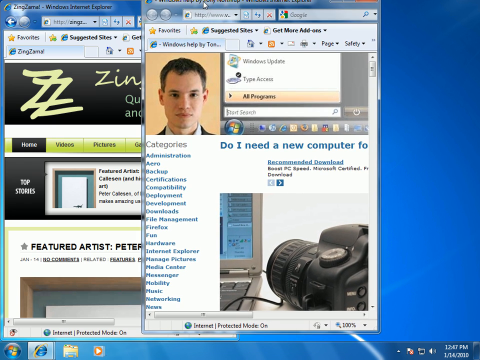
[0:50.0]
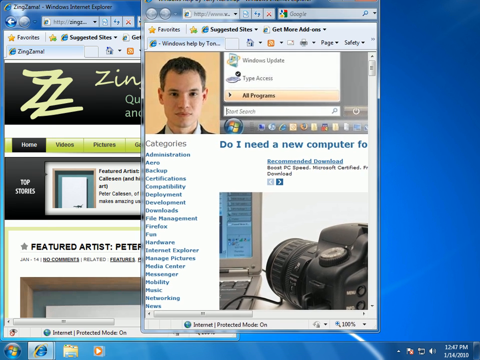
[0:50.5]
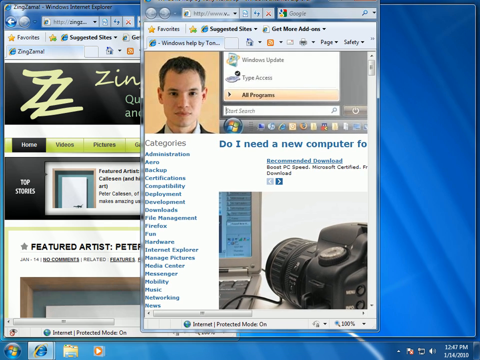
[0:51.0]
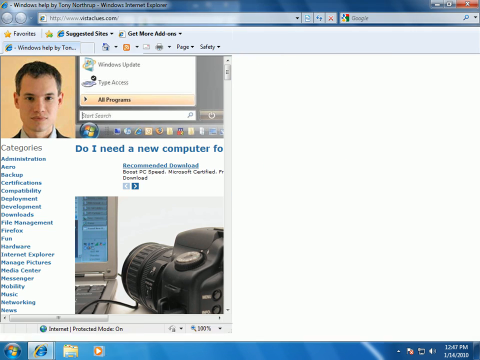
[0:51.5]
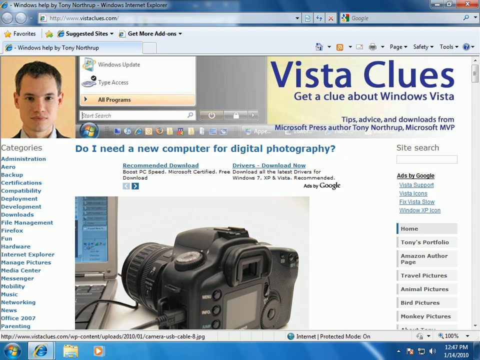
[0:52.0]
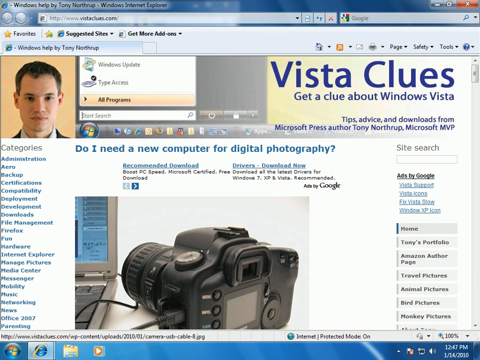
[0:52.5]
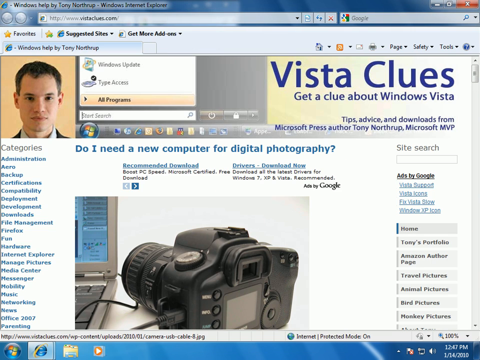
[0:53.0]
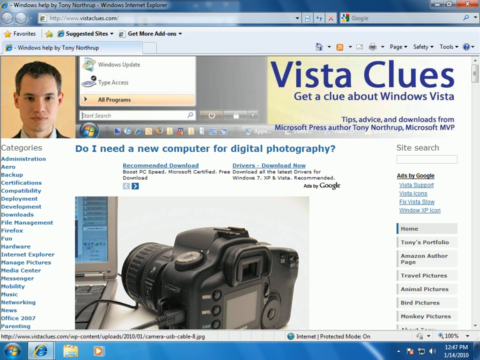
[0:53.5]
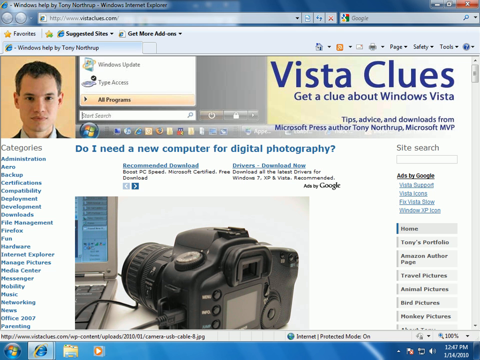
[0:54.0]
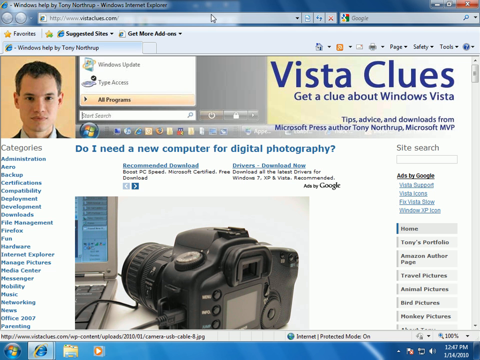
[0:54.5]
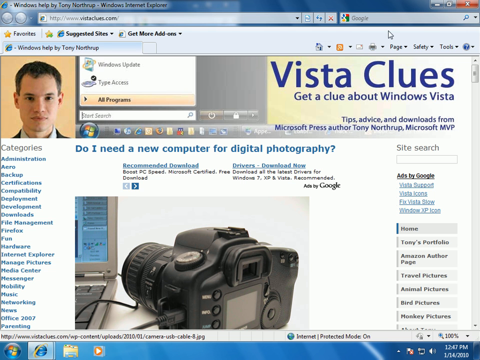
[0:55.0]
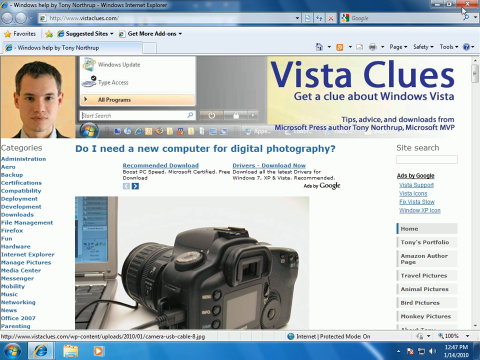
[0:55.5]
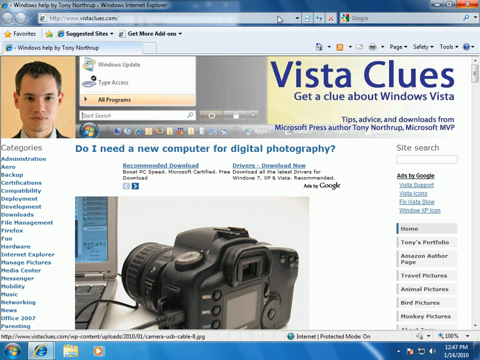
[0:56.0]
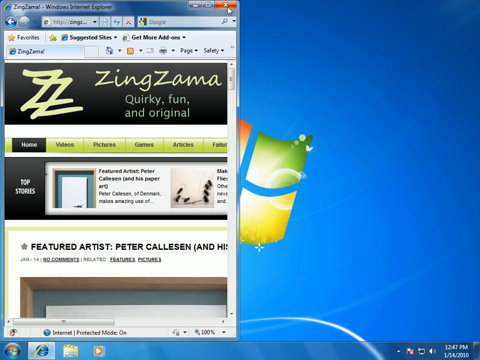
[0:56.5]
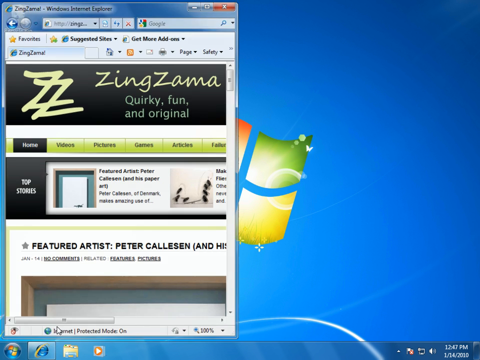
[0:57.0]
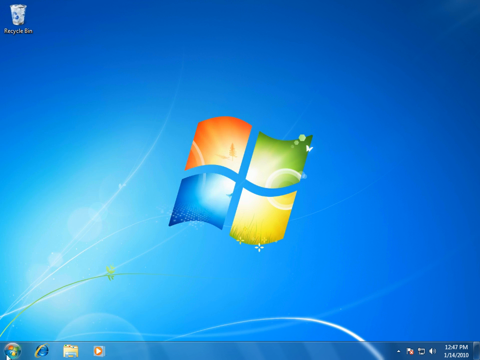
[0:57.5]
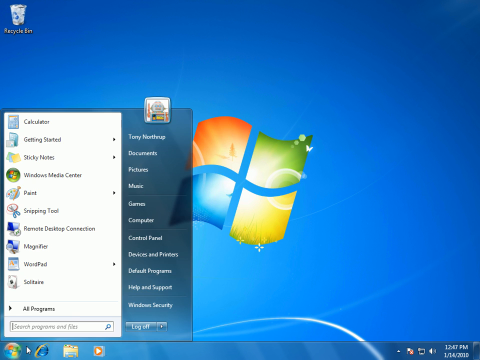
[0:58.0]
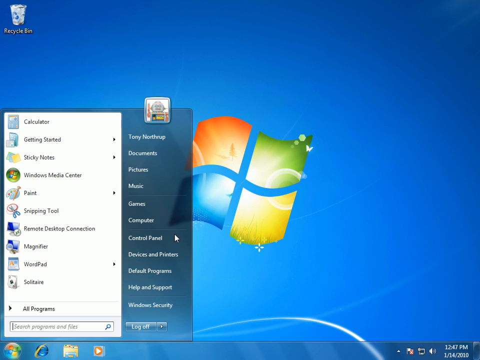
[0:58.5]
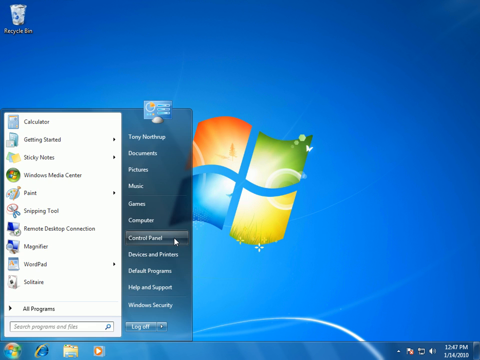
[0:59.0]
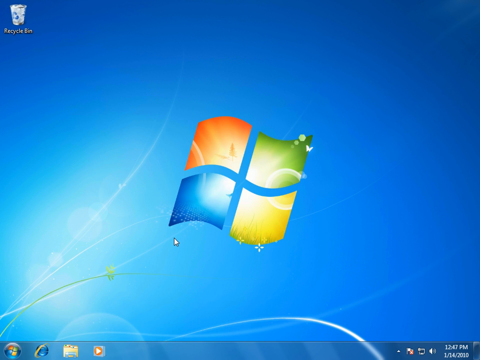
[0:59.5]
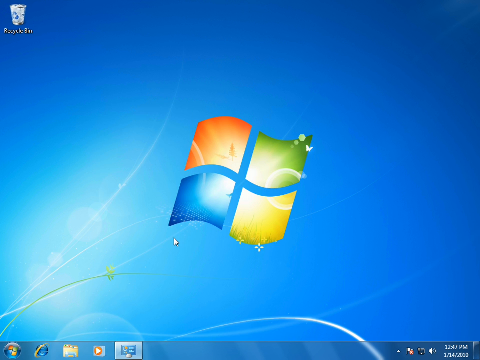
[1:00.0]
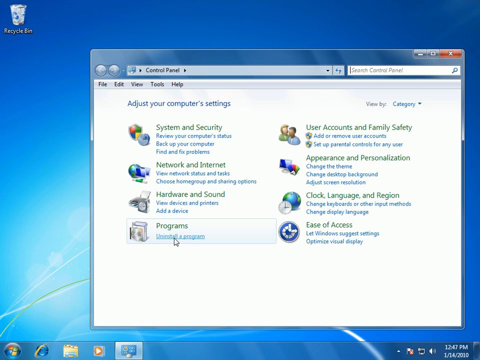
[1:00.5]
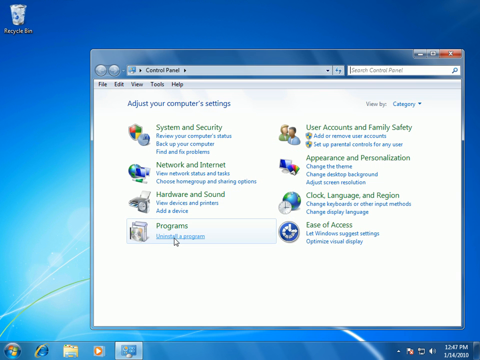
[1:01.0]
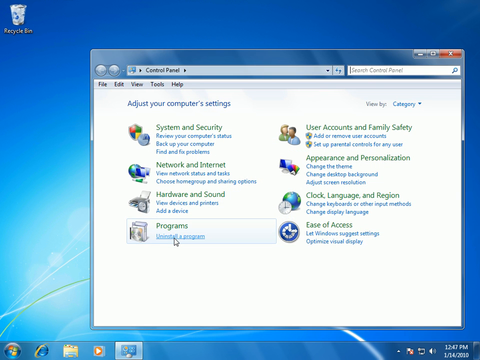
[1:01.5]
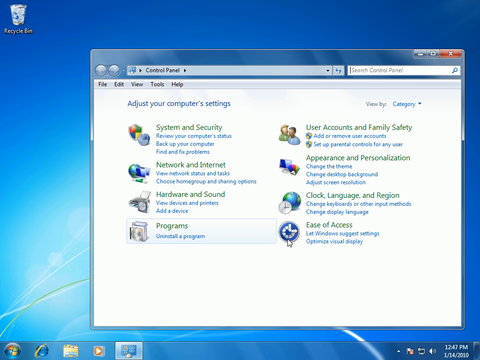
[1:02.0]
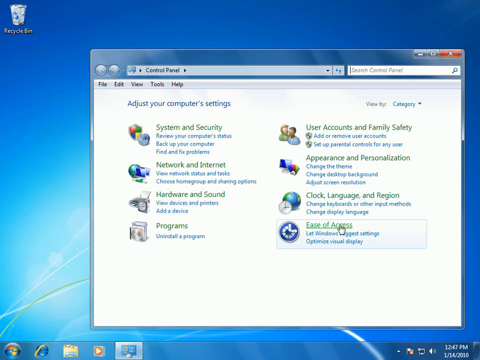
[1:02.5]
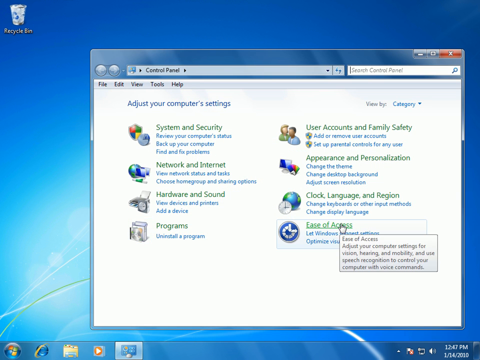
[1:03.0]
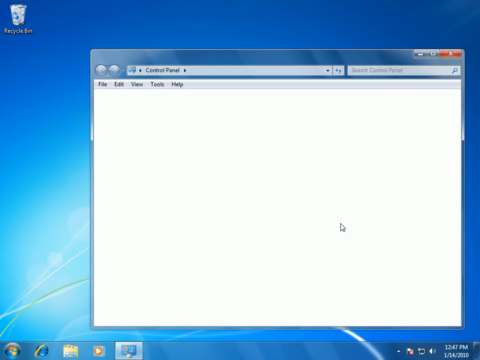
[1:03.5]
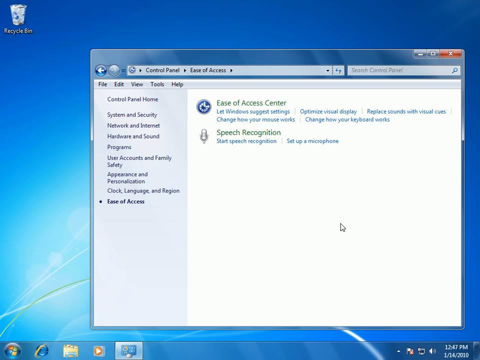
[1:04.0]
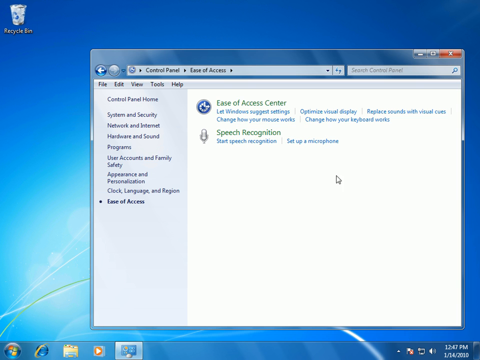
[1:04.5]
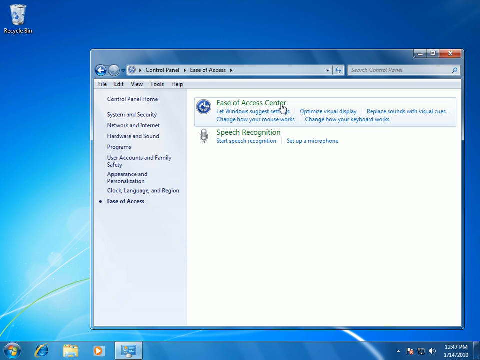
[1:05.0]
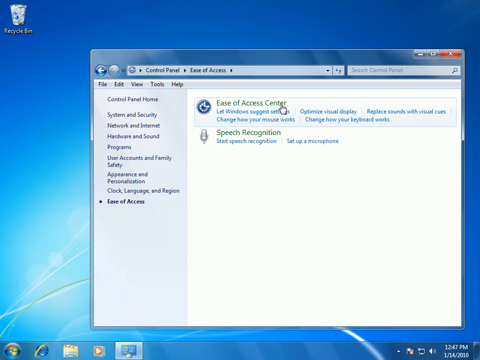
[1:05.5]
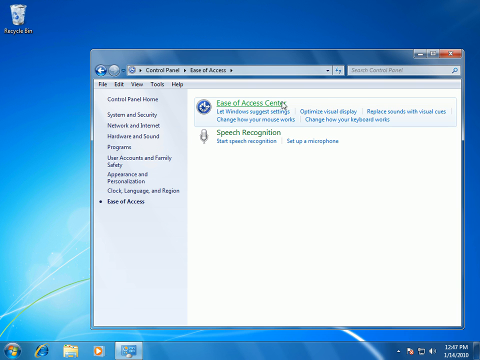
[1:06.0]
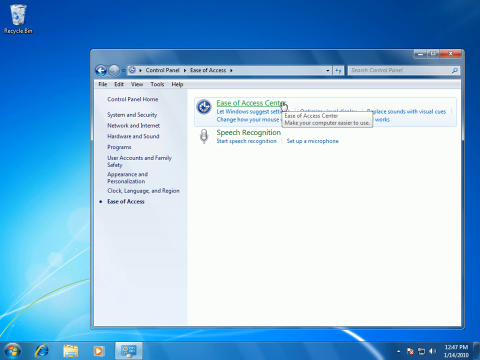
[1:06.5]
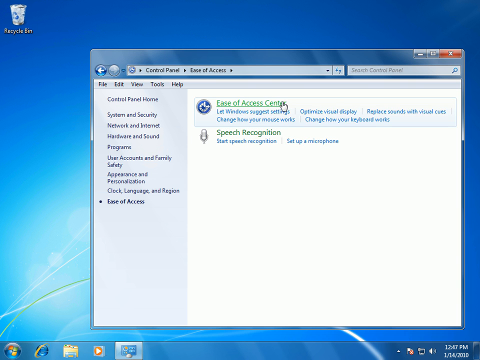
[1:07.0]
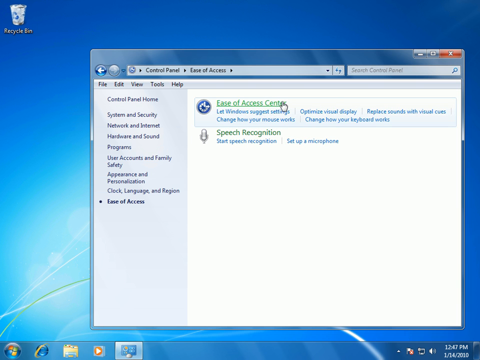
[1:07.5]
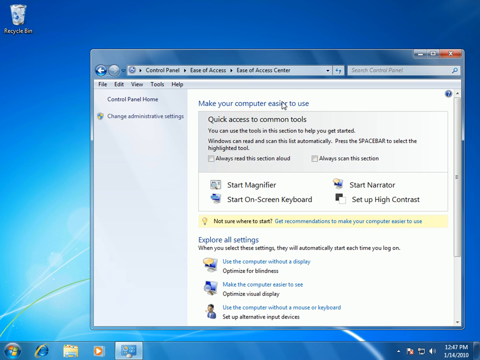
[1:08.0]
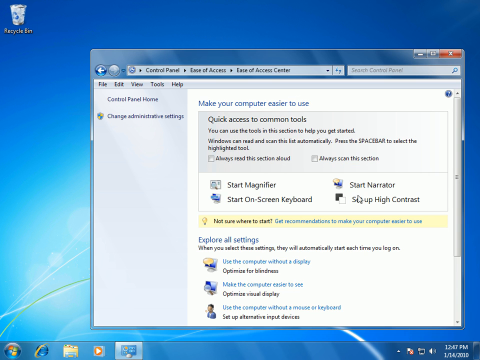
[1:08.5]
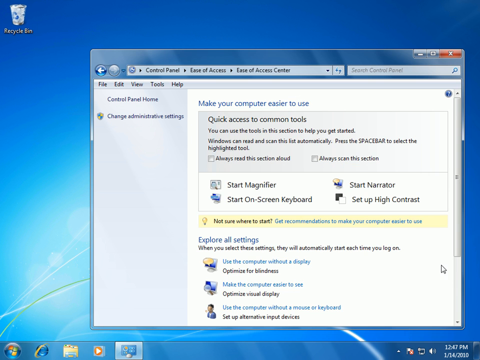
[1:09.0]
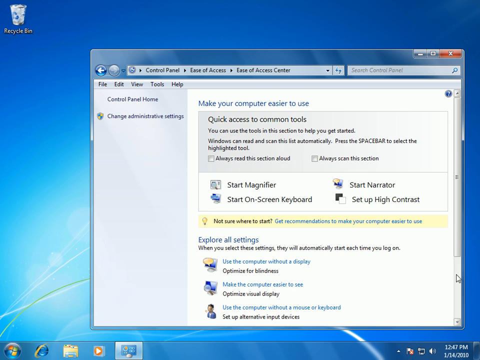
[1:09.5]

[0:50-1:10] The cursor goes to the upper right-hand corner and clicks the X. The window first shrinks to half size and then disappears completely, revealing the home screen: a typical Microsoft background, dark blue with four squares in the middle colored orange, green, blue, and yellow. The home menu is opened and Control Panel is selected, opening a box labeled control panel with two columns of options. The last option on the right side, ease of access, is clicked. This leads to another screen with the options ease of access center and speech recognition, along with another menu along the left side. Ease of access center is clicked and the page is scrolled to the bottom; it looks like another walkthrough of computer settings.